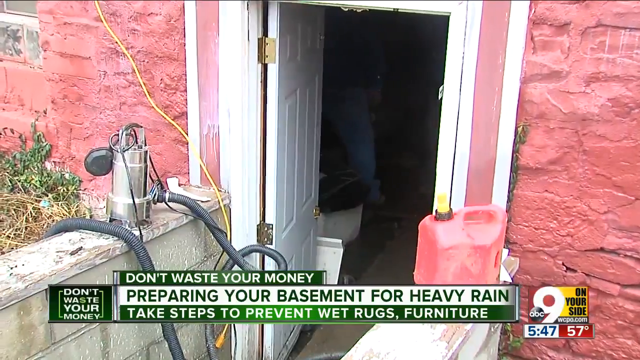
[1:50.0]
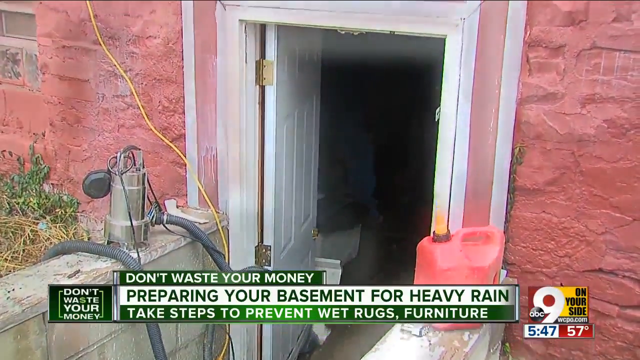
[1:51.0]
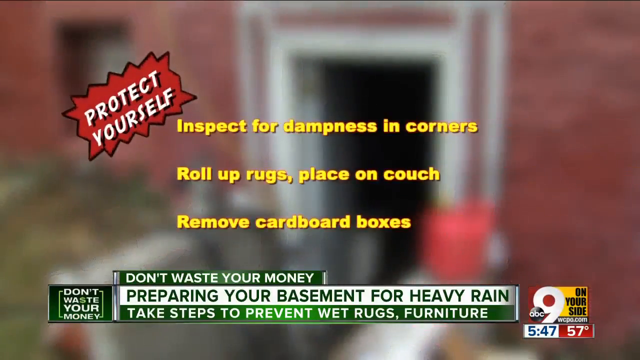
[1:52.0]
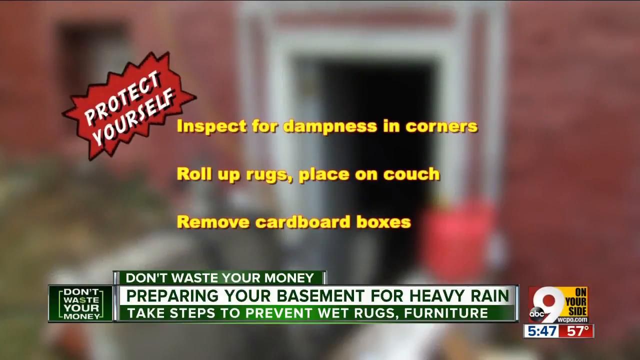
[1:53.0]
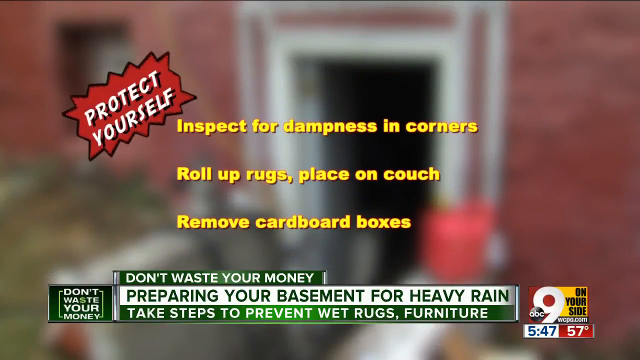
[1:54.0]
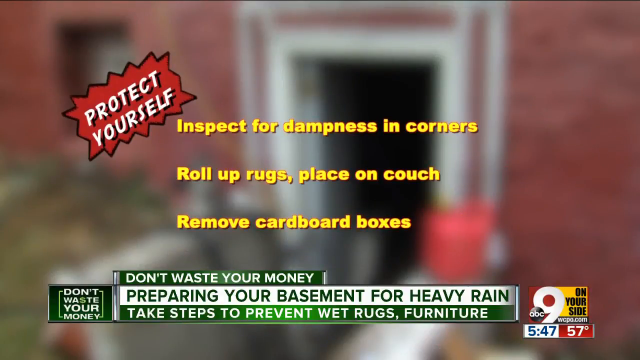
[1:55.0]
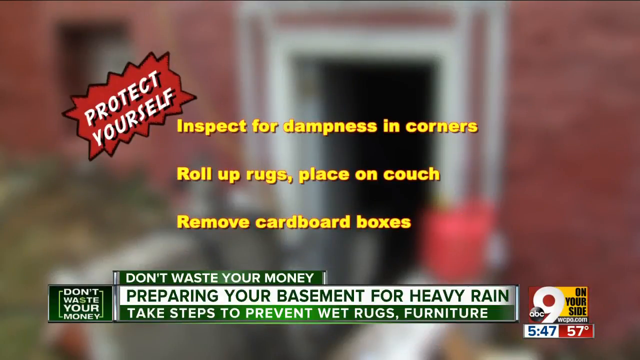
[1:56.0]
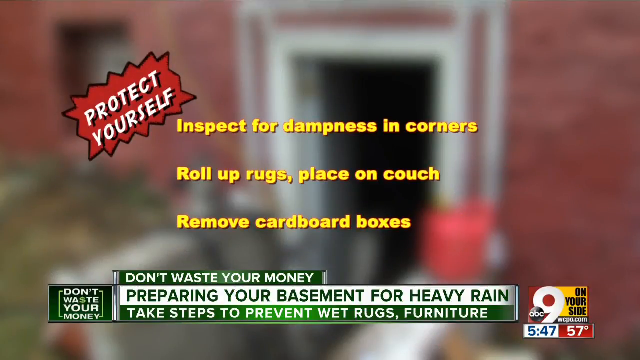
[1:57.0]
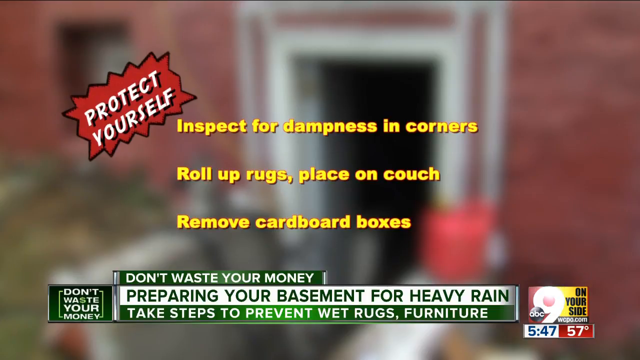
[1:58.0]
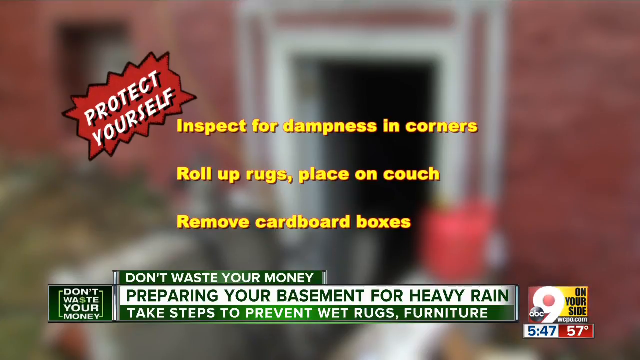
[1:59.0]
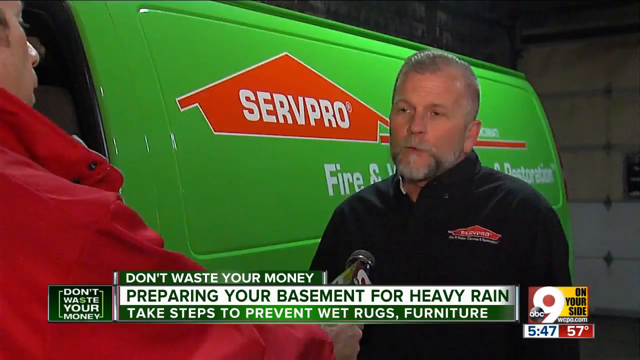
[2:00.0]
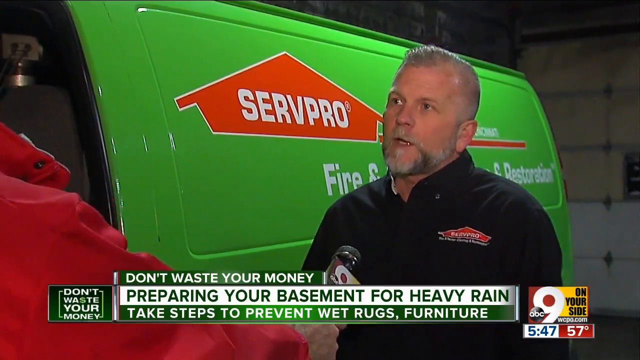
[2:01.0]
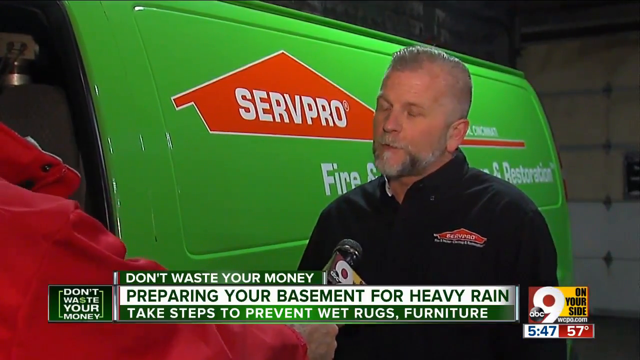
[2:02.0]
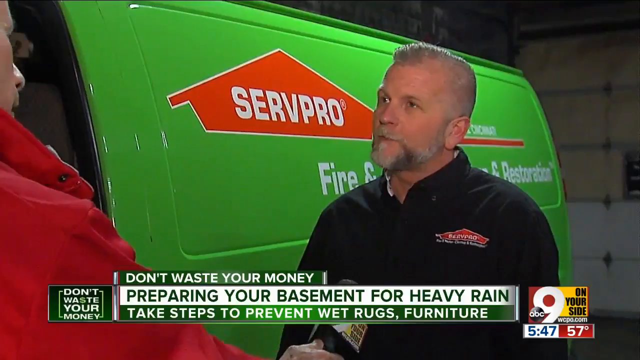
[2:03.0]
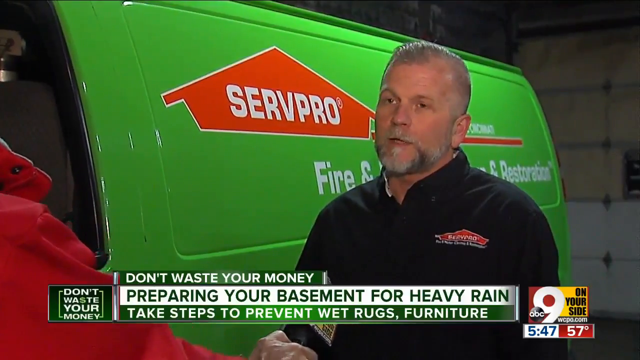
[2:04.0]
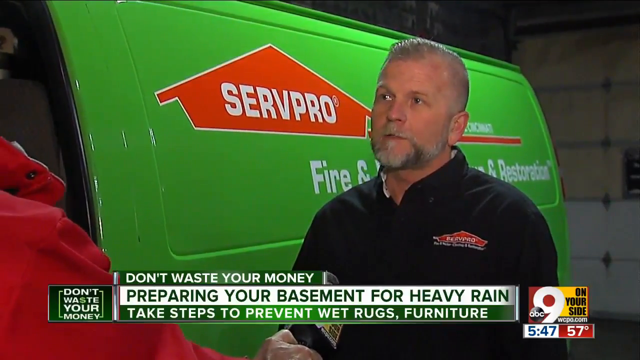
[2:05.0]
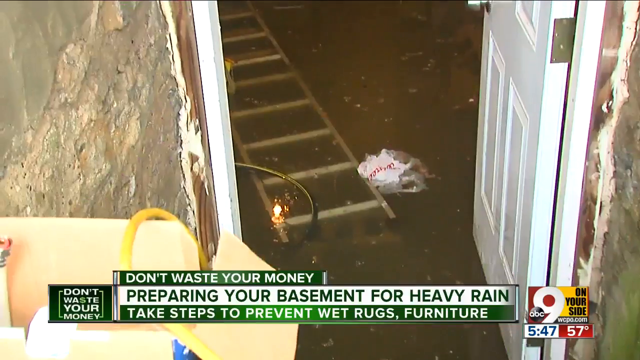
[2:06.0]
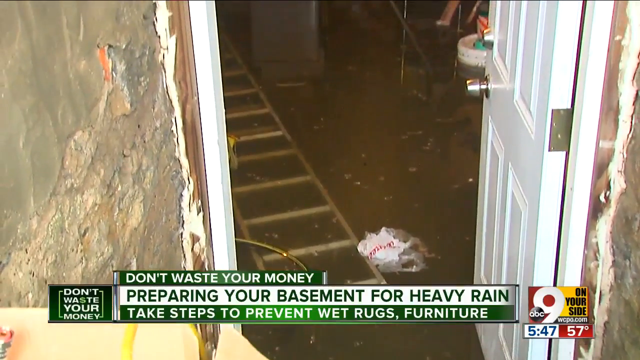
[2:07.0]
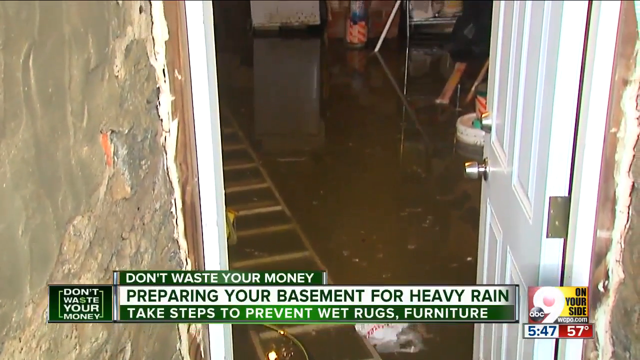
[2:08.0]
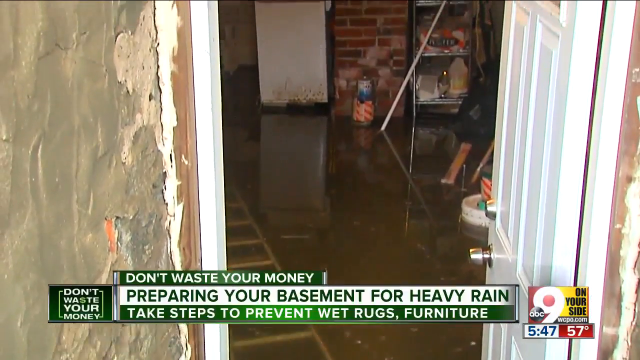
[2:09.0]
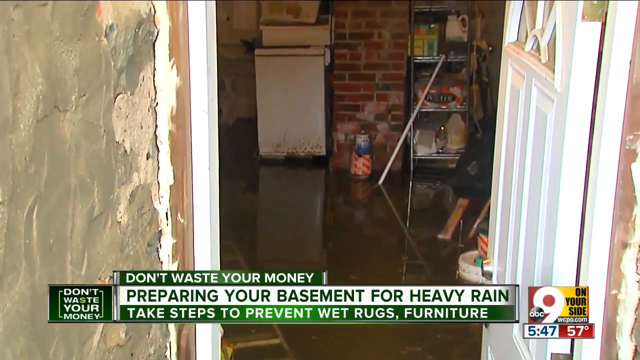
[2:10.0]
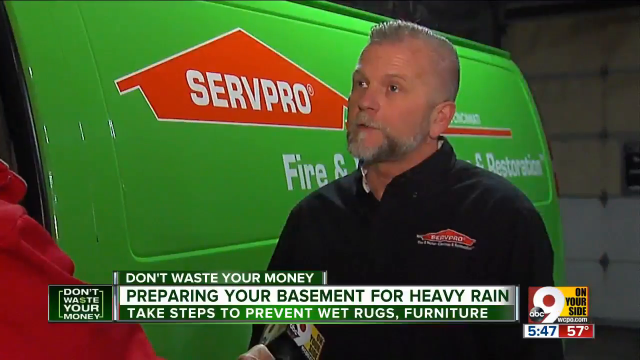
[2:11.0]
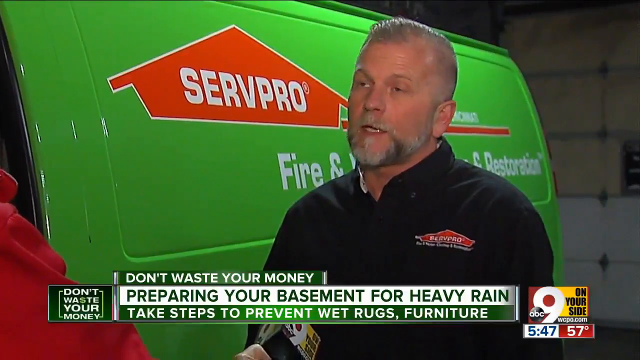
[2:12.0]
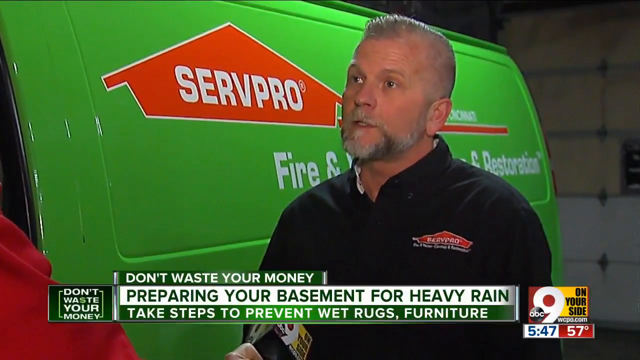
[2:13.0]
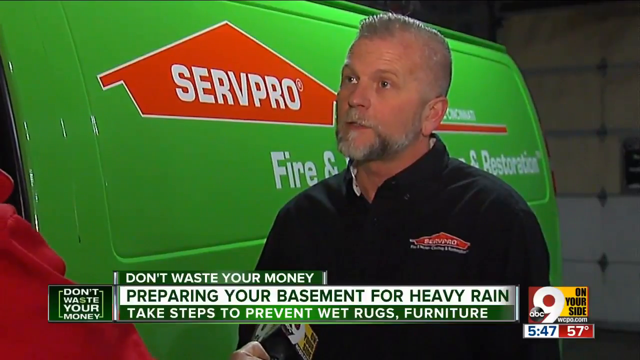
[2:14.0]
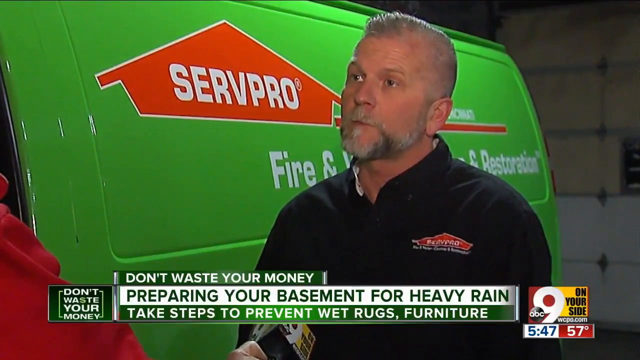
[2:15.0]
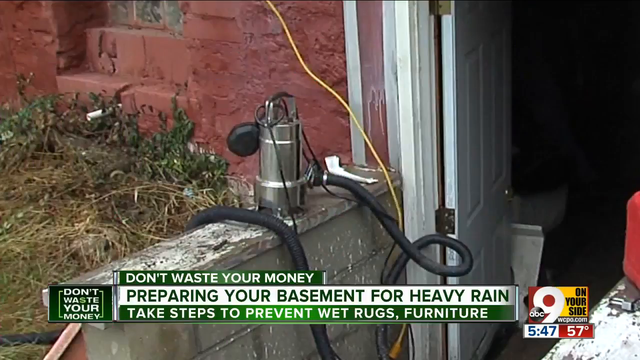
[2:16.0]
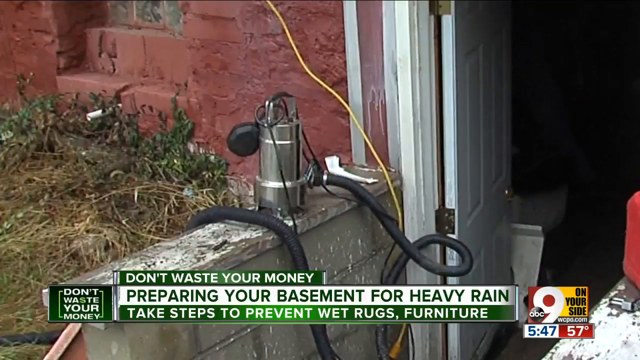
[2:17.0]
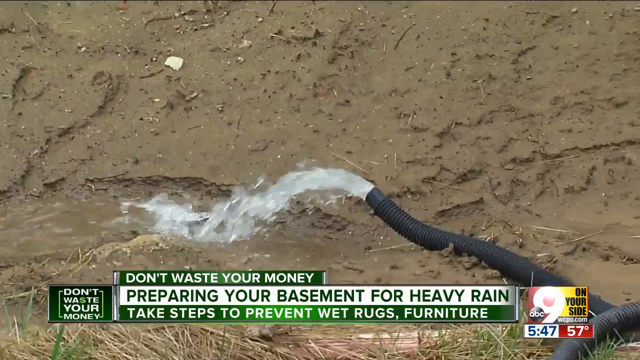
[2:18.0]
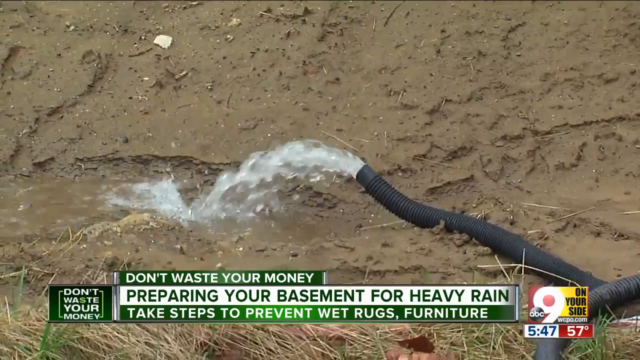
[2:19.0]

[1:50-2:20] A house painted pink, which looks very yellow, is shown. Plumbers run a water pump down to the basement to siphon out the water. A caption reads "protect yourself, inspect for dampness in quarters, roll up rugs, place on couch, remove cardboard boxes," as part of the Don't Waste Your Money story on preparing your basement for heavy rainfall, and text says to take steps to prevent wet rugs and furniture. The background is blurred. The scene cuts to a man, apparently a professional plumber or some type of inspector, with a company called Surf Pro. He has a beard and a very clean-cut head of hair. Footage follows of flooded basements with several feet of water standing in the bottom of them, and of gallons of water being pumped out of the end of a hose into a drainage.